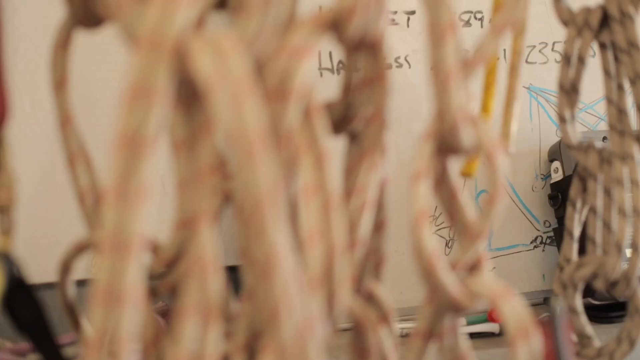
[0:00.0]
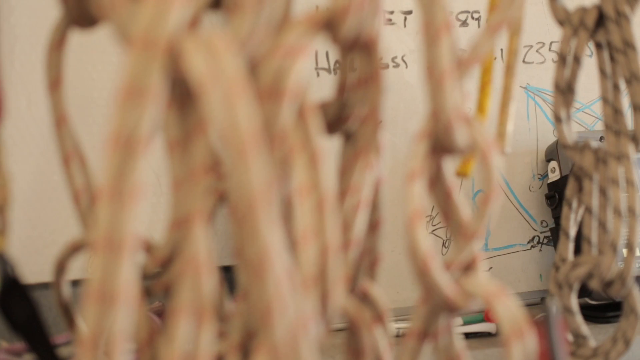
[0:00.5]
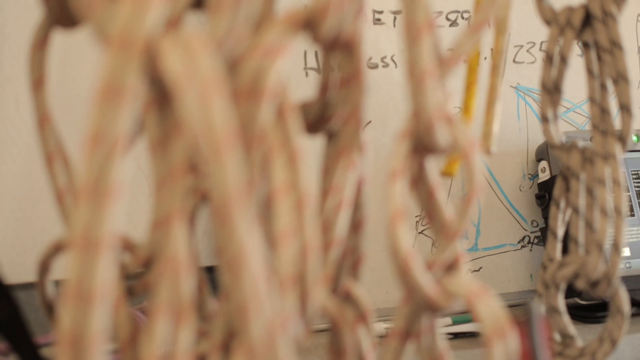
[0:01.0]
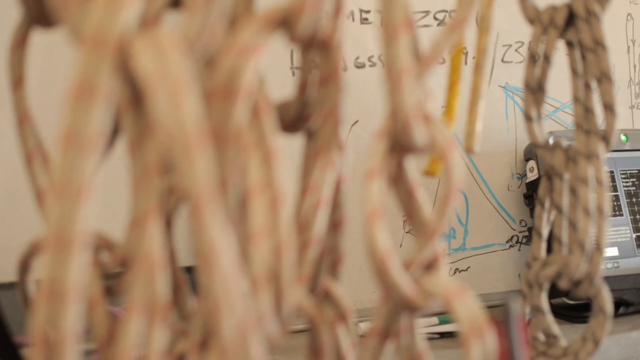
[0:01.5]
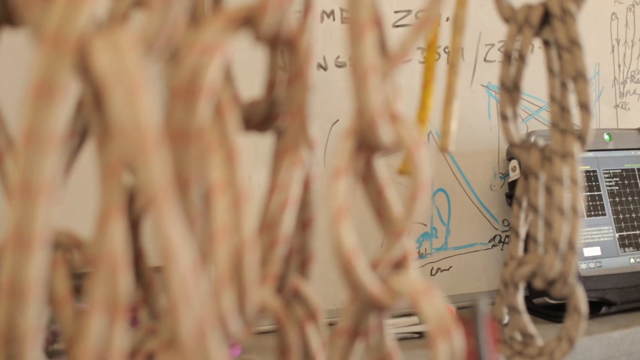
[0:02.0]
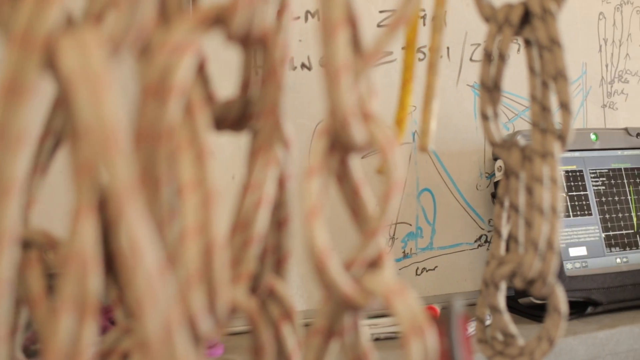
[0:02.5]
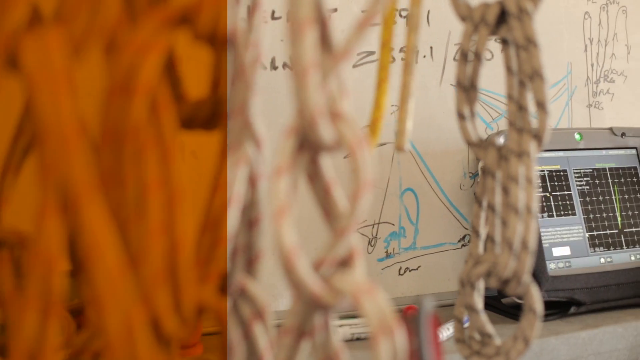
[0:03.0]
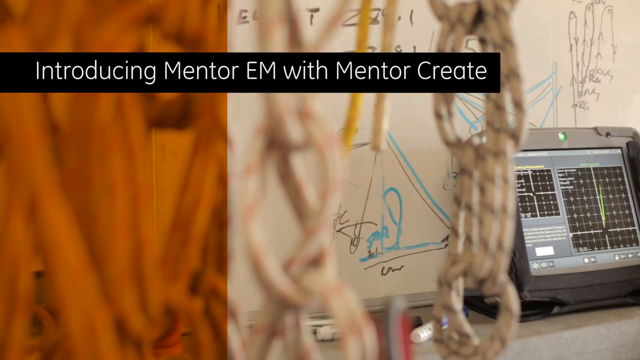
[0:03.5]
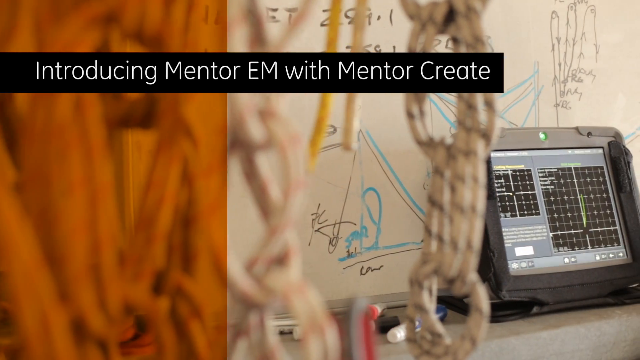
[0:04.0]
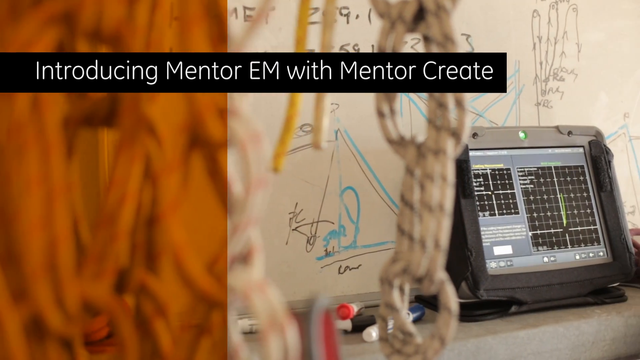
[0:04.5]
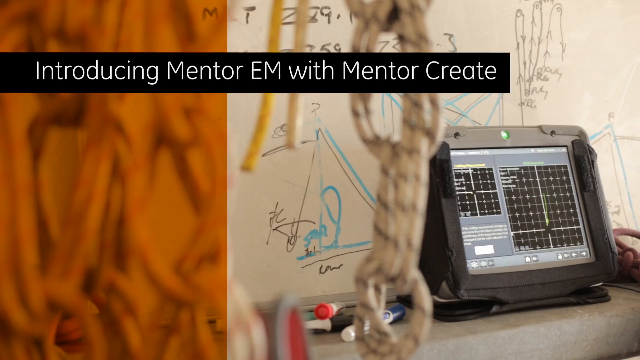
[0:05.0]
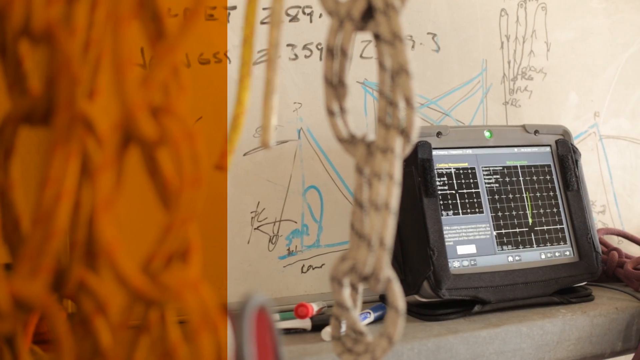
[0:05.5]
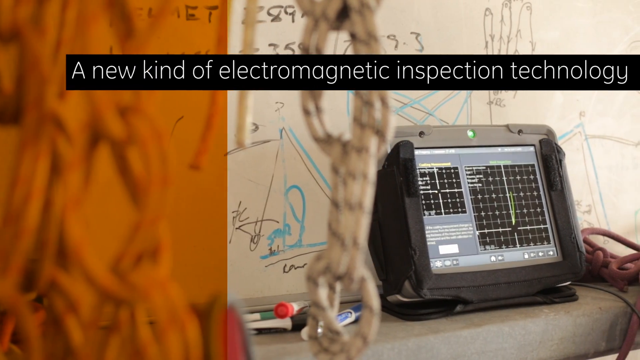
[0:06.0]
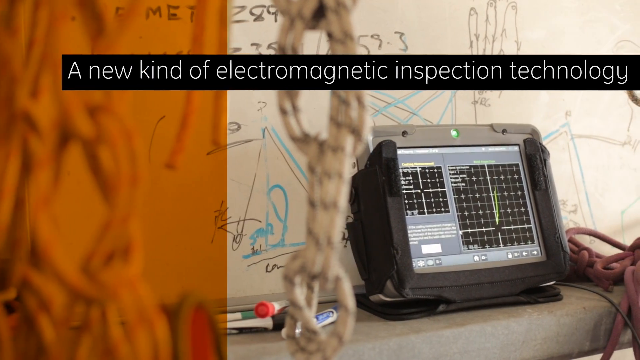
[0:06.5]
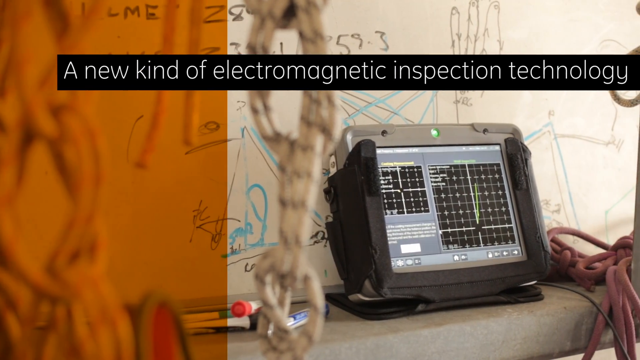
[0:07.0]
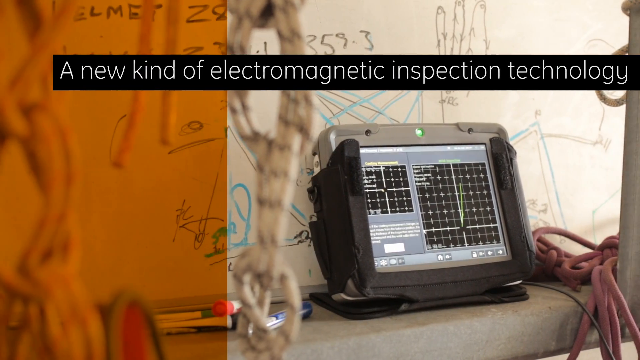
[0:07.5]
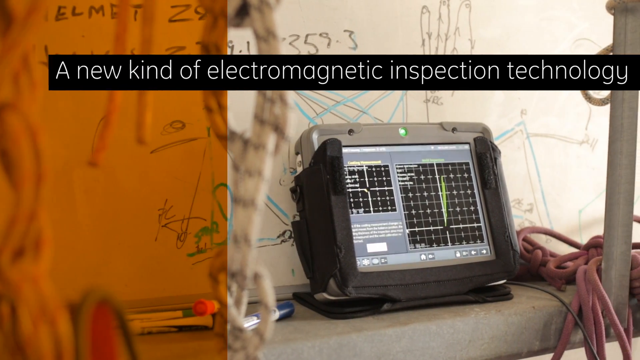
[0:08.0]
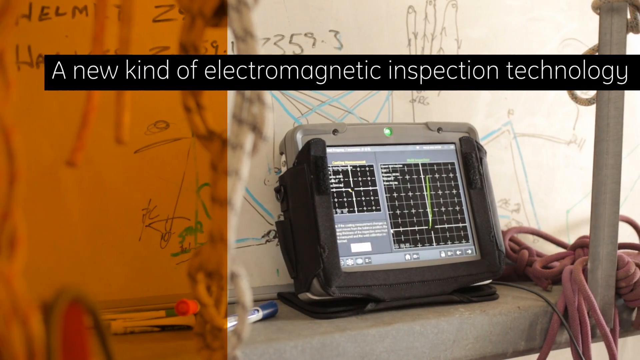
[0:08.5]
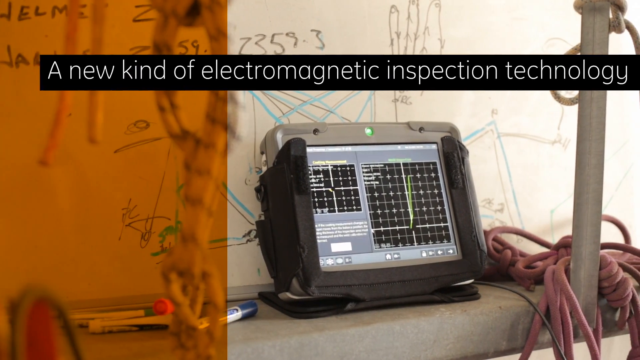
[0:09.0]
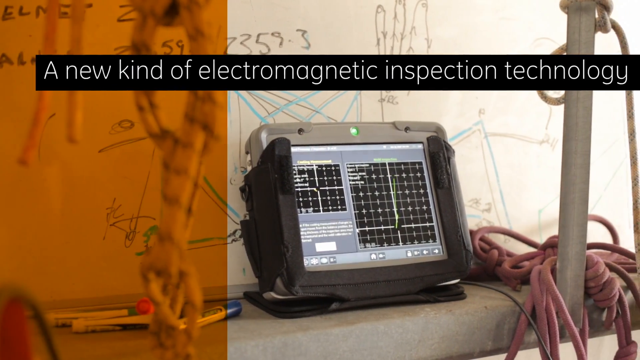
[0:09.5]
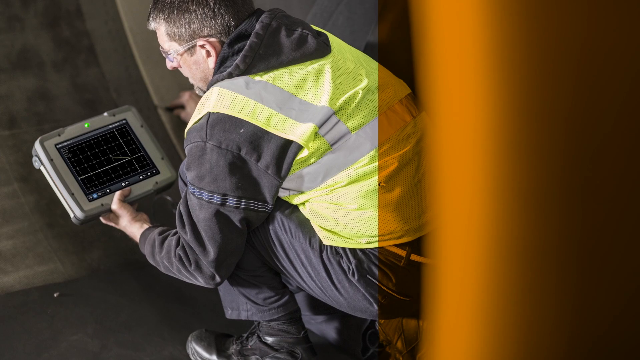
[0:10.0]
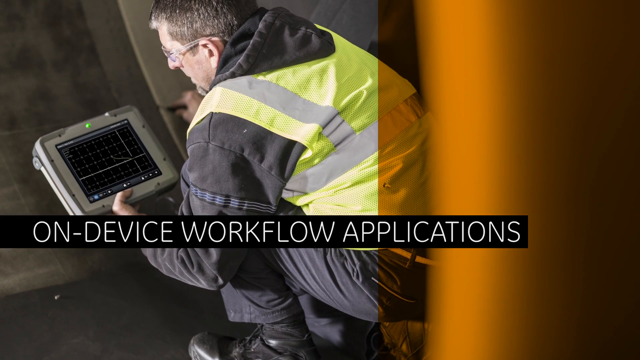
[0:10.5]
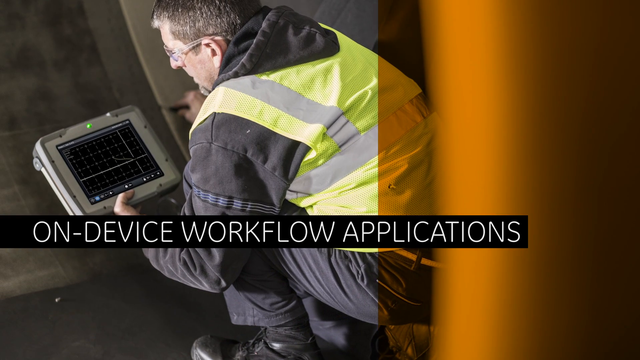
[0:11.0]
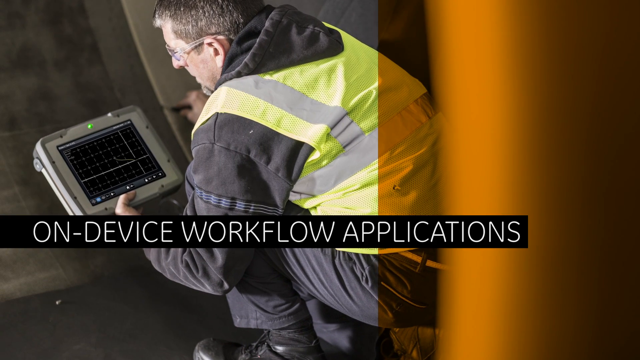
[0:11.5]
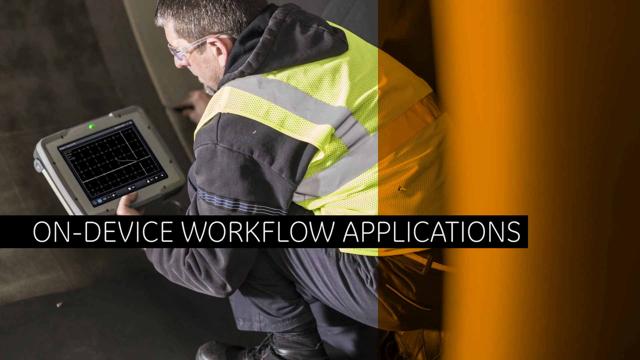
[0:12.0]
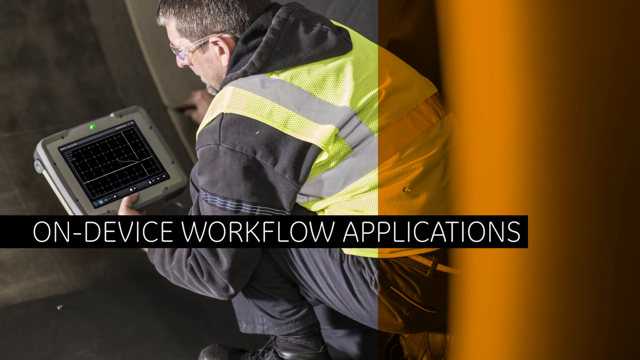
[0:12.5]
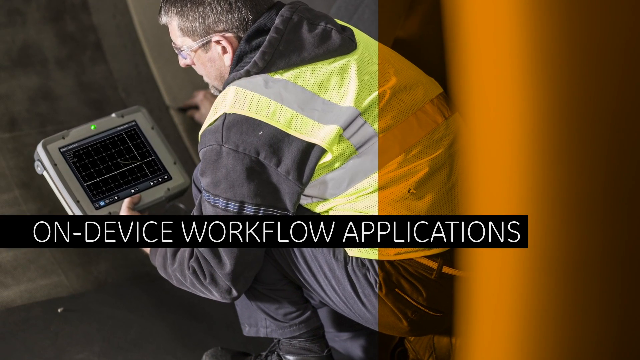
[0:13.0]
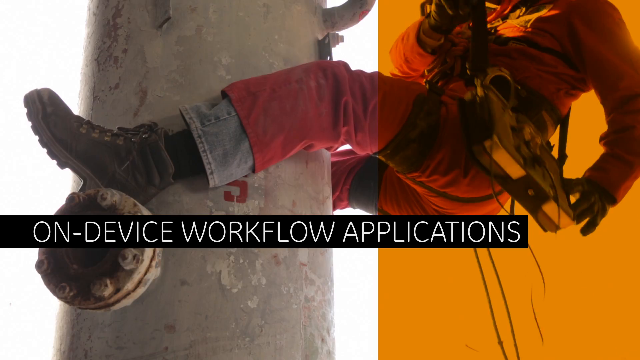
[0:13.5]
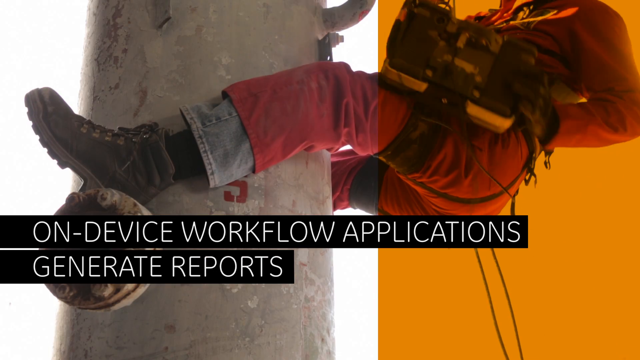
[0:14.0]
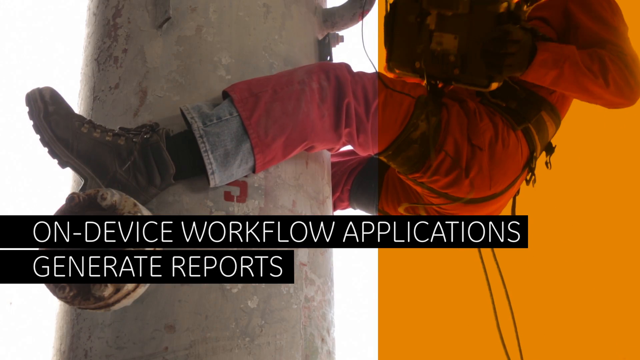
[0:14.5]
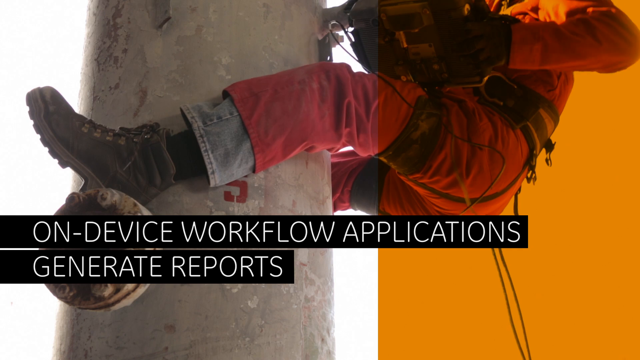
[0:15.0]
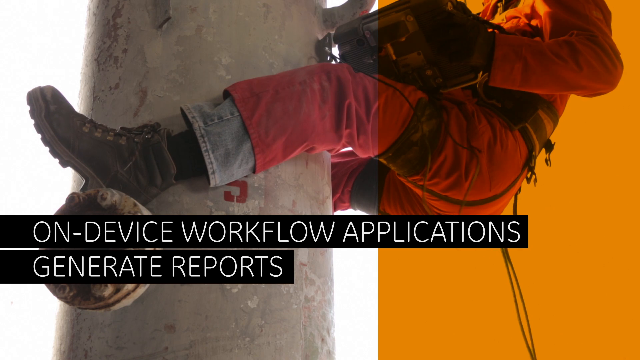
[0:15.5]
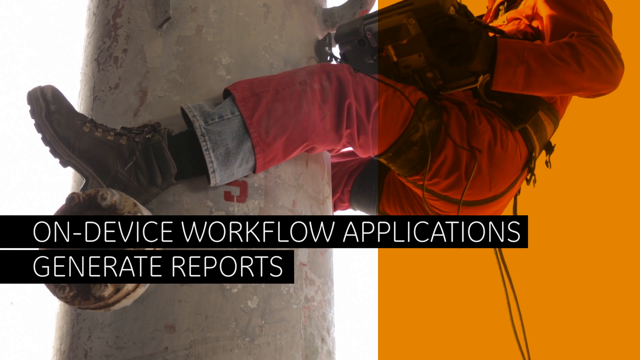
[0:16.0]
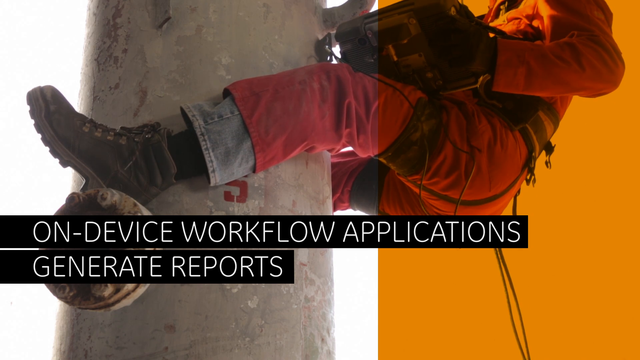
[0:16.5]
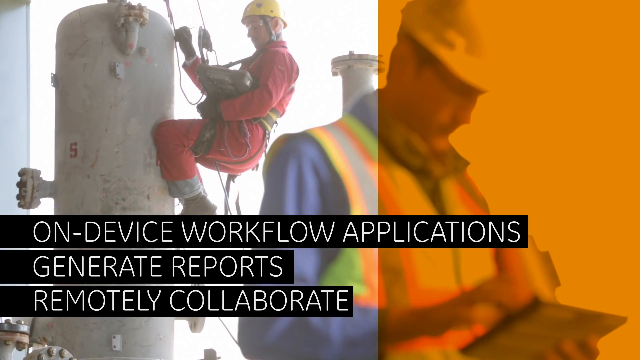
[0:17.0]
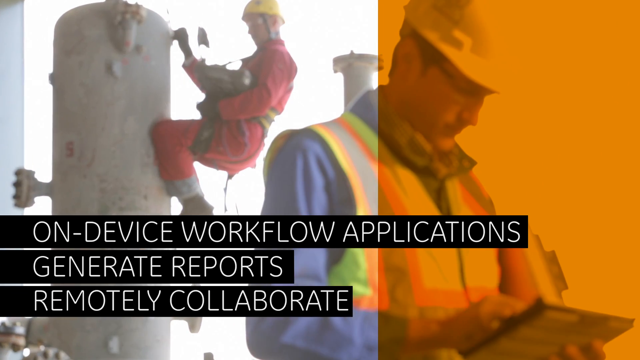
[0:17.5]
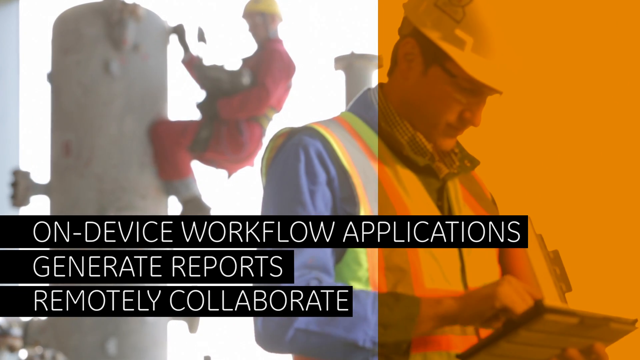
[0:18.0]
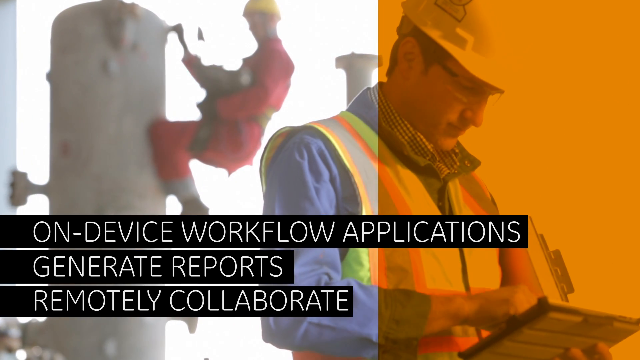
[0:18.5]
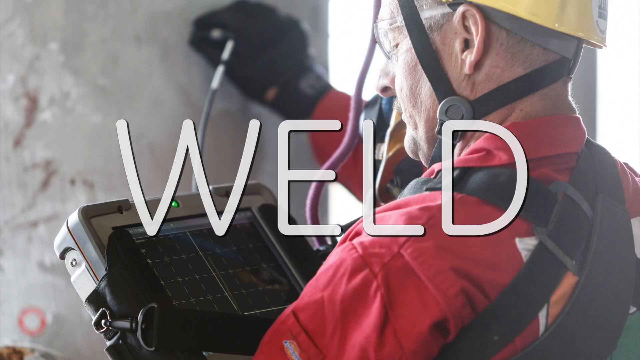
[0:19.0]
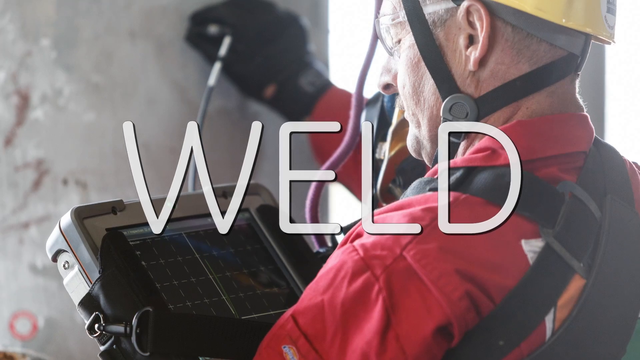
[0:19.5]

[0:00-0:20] The video opens on a view of tangled ropes, possibly bungee ropes. The setting appears to be a classroom, with a white marker board in the background and a computer interface tablet in the front. The title caption reads "Introduction Mentor EM with Mentor Create," and the words "a new kind of electromagnetic inspection technology" come across the screen. The video pans to the right to show a man monitoring a device while scanning a surface; he wears a reflective yellow vest and safety goggles. The video then tracks to what appears to be a person in a harness around his legs and waist, apparently installing something. He wears red overalls and brown boots. The words "Weld" and "Aerospace" flash on the screen.